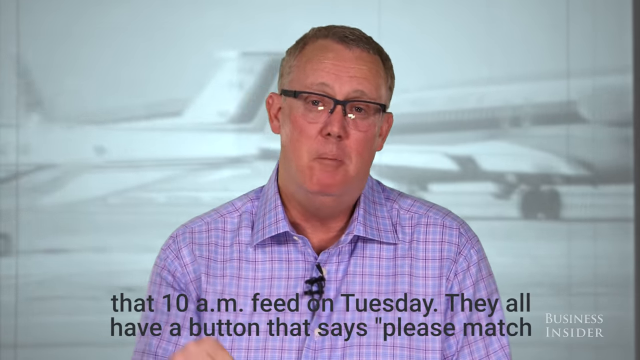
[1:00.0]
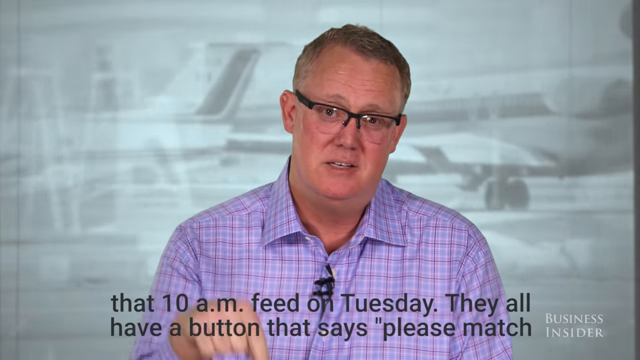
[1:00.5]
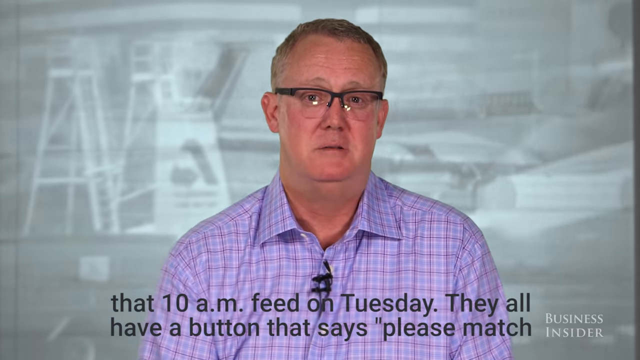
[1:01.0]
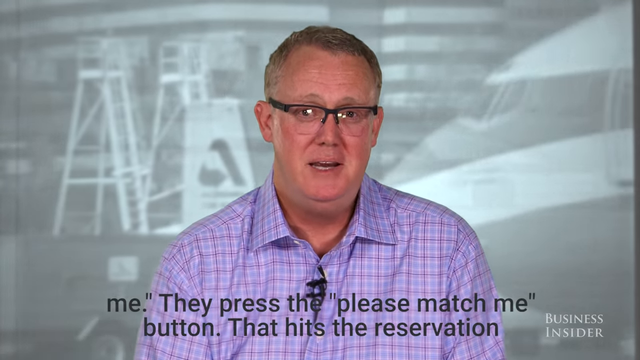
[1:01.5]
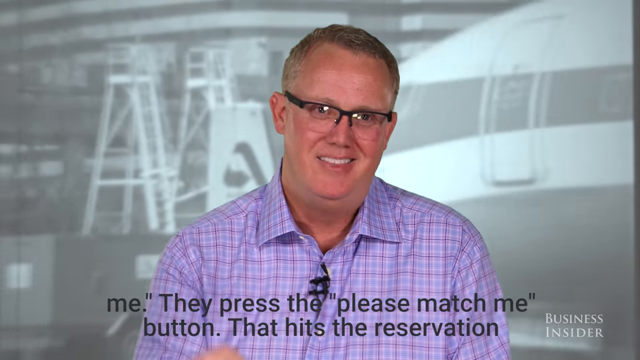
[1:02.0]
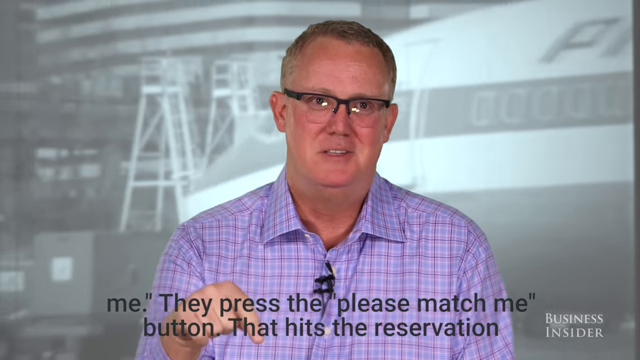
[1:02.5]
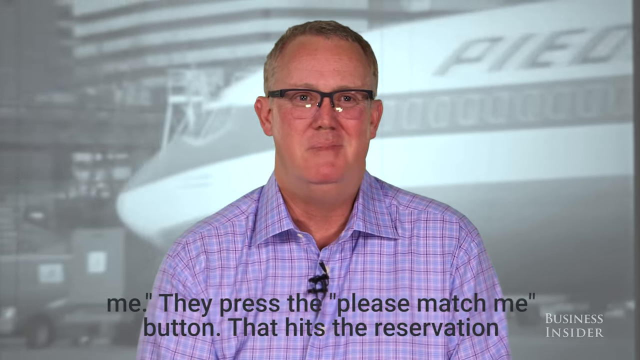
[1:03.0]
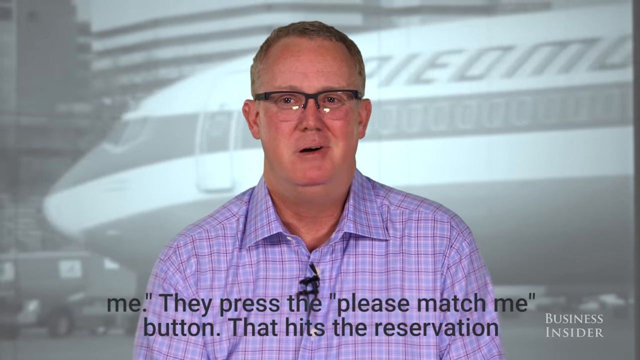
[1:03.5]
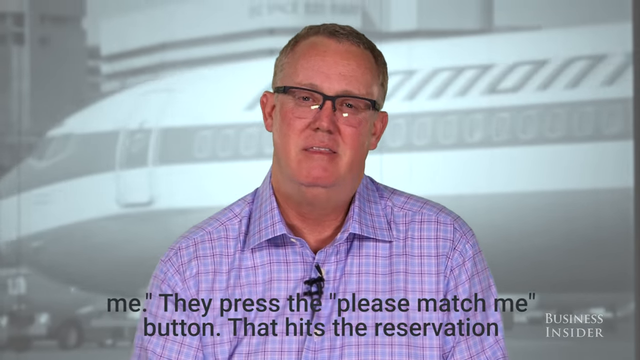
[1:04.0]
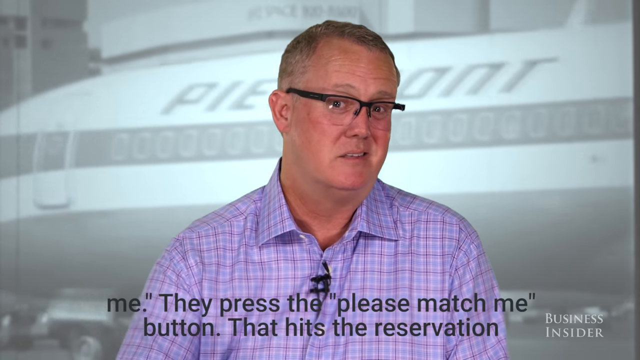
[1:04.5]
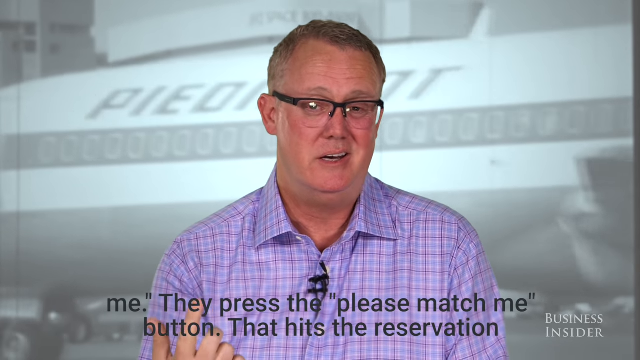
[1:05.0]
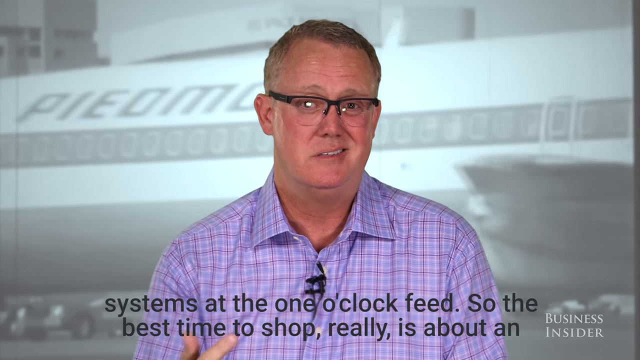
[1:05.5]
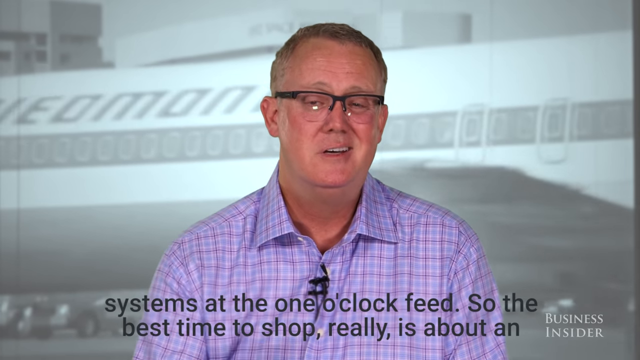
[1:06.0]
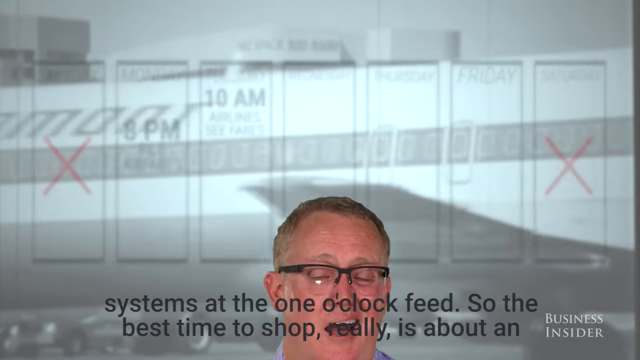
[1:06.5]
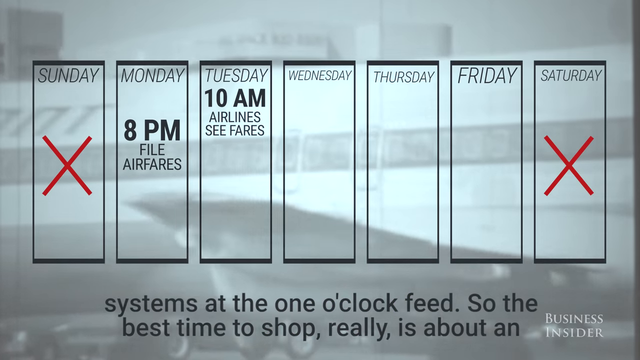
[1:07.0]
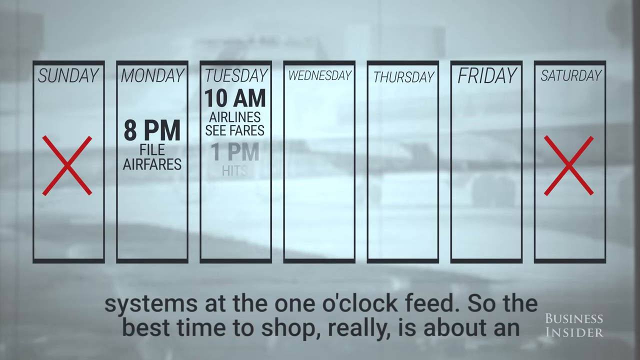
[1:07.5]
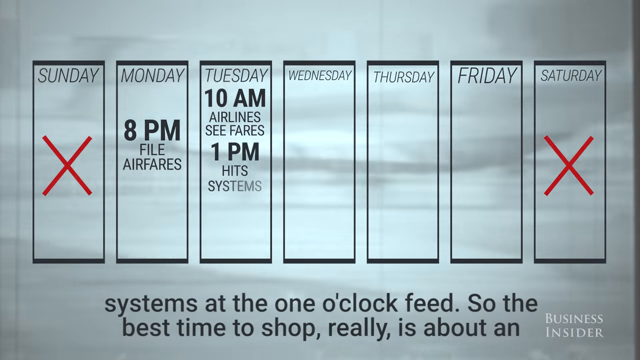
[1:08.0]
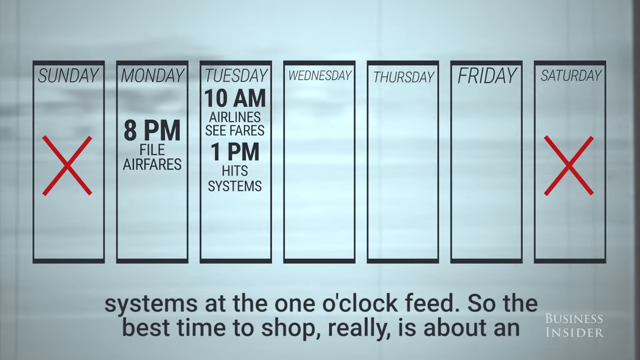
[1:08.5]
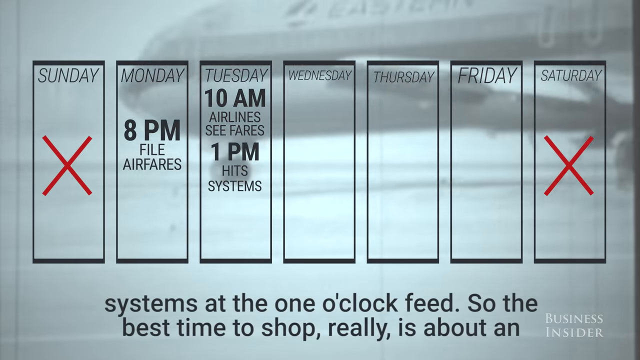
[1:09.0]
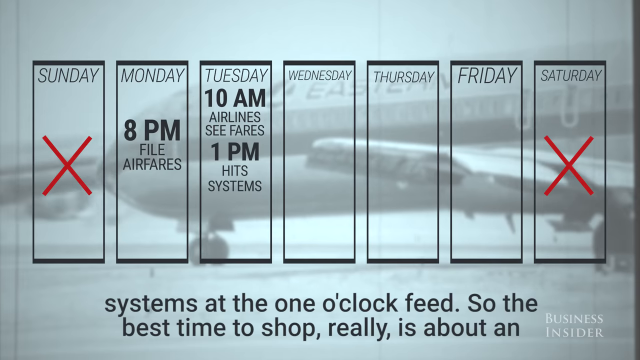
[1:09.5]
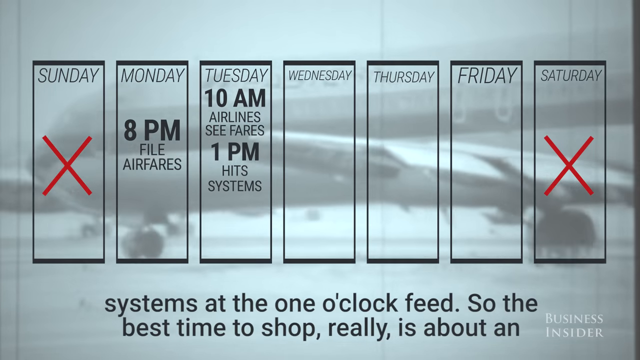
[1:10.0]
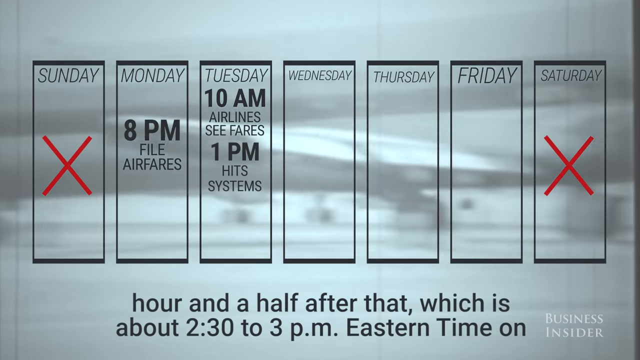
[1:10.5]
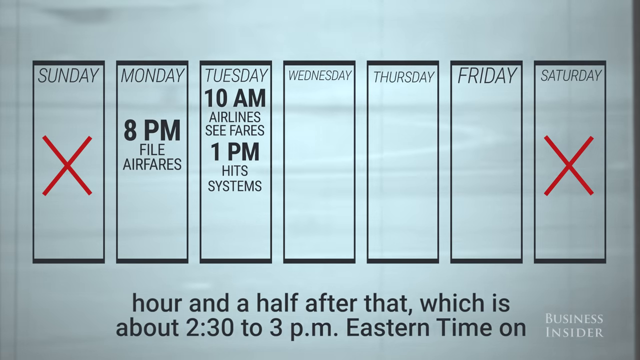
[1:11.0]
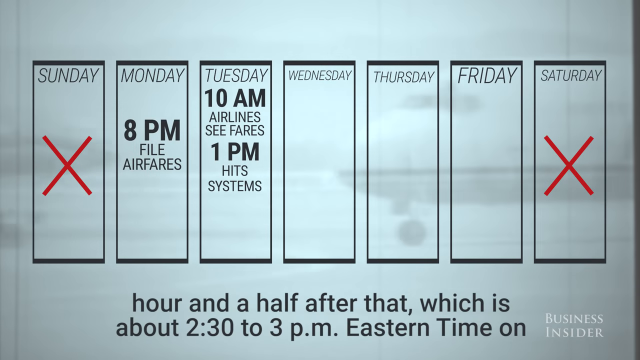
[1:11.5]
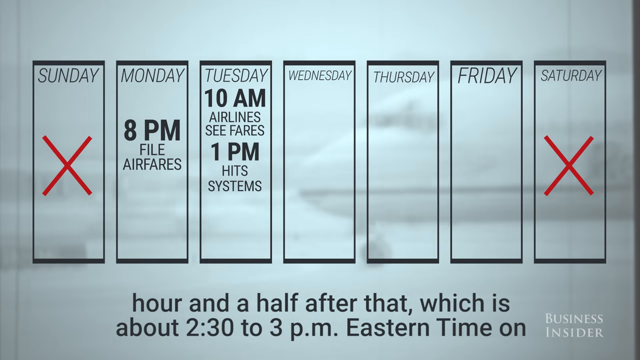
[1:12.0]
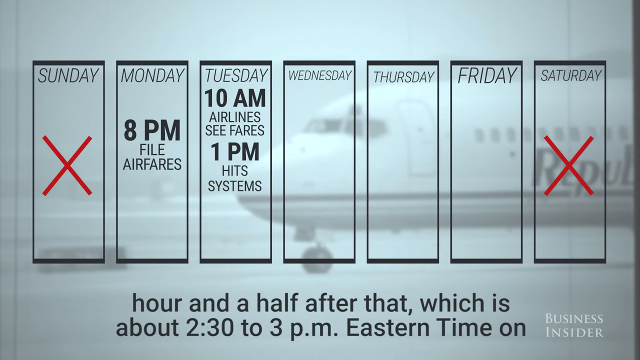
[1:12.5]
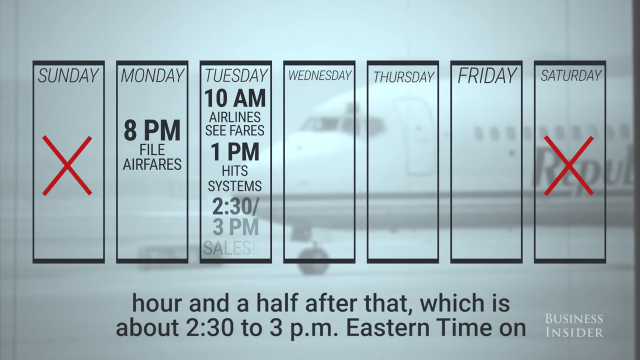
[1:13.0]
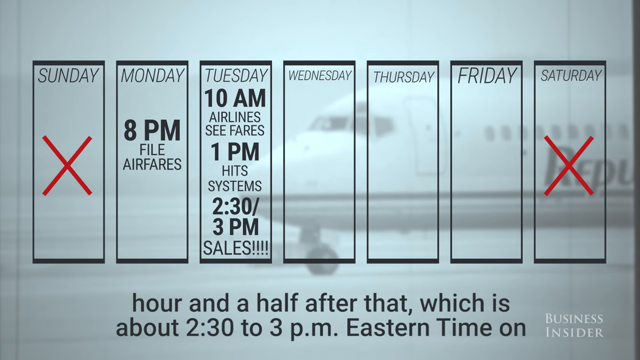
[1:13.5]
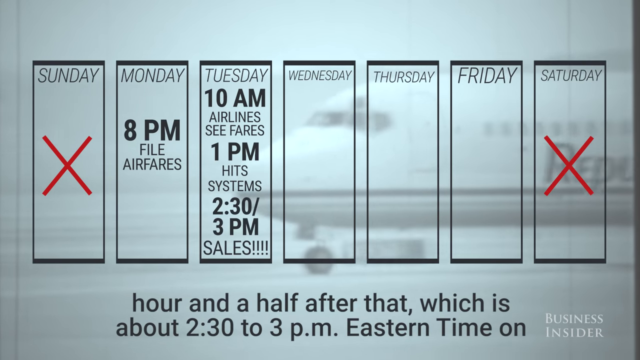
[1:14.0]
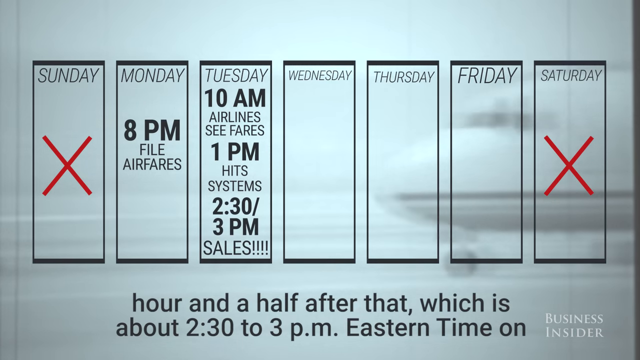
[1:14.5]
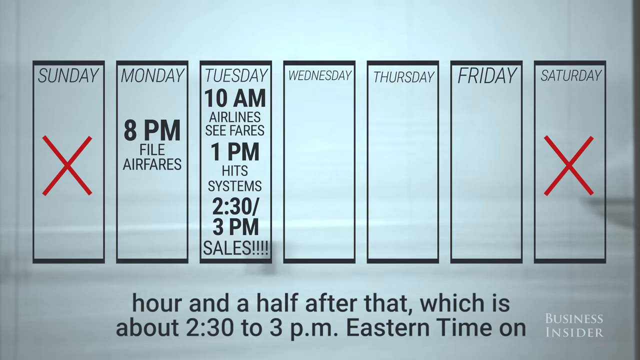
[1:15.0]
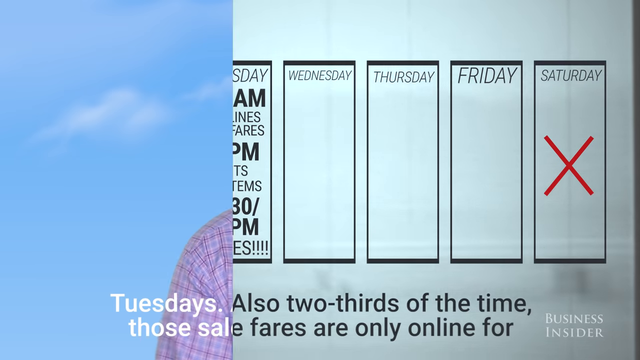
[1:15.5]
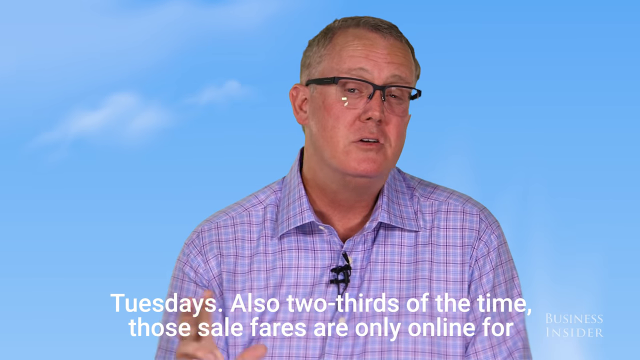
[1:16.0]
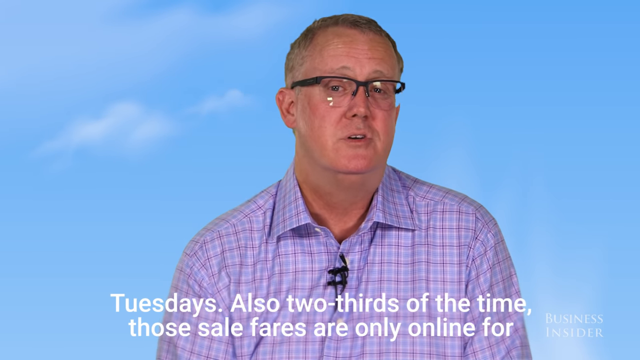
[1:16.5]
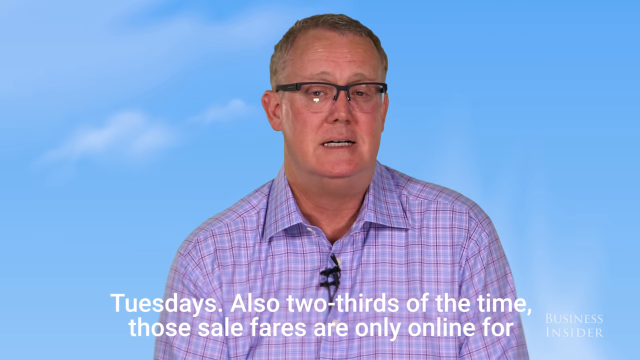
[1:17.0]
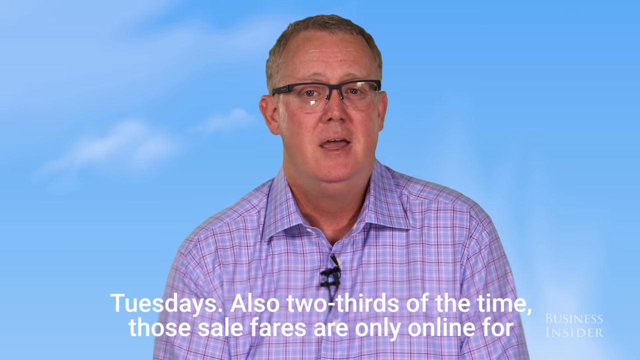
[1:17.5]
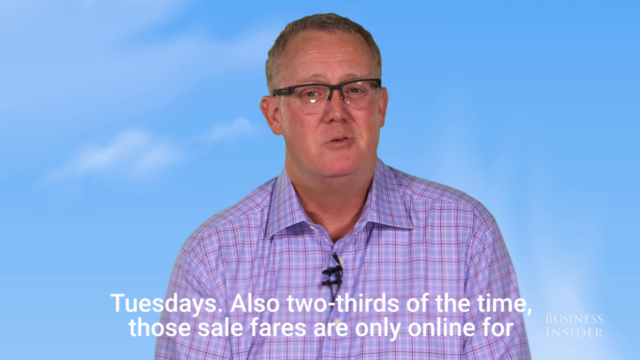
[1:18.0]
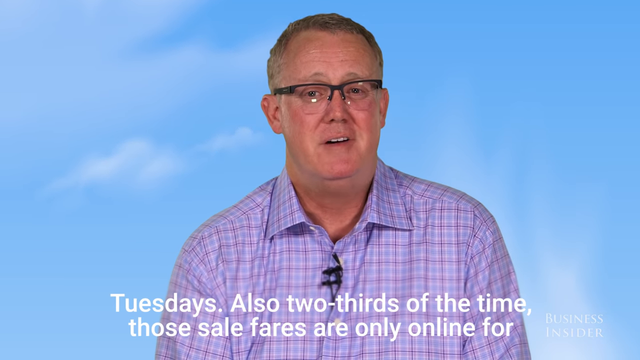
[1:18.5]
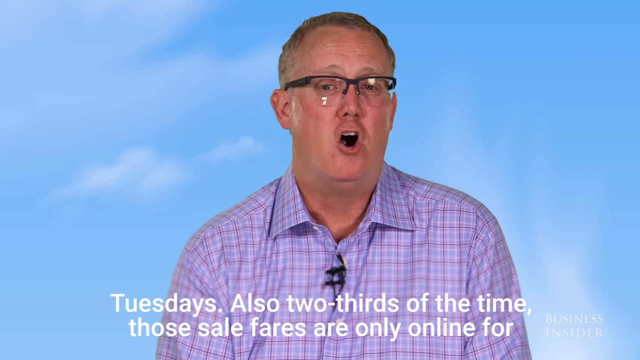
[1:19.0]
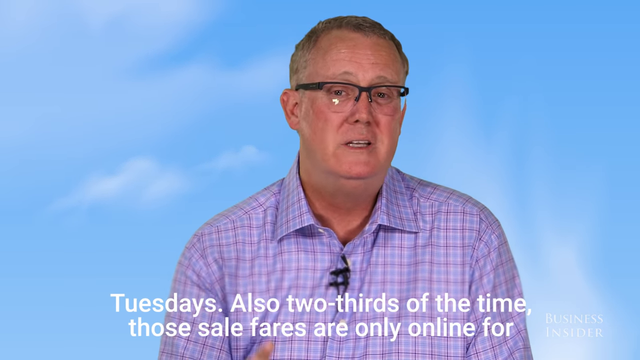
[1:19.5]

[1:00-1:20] In the Business Insider video, a man named Sean Coney tells viewers which days are best to purchase airfare tickets for the lowest price. Subtitles at the bottom of the screen read: "that 10am feed on Tuesday they all have a button that says please match me. They press the please match me button that hits the reservation systems at the one o'clock feed. So the best time to shop really is about an hour and a half after that which is about 2.30 to 3pm eastern time on Tuesdays." The man wears a collared, long-sleeved button-up shirt with a checkered pattern in light blue, white, and red.